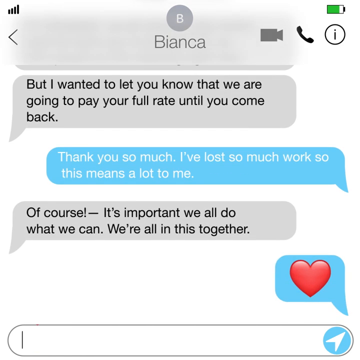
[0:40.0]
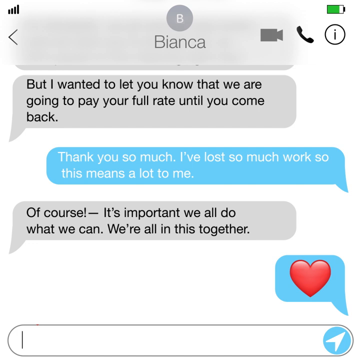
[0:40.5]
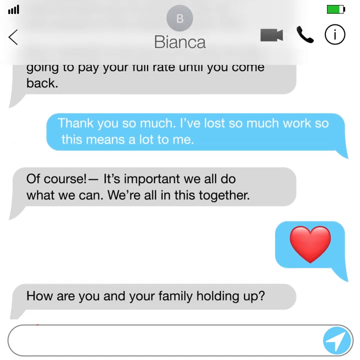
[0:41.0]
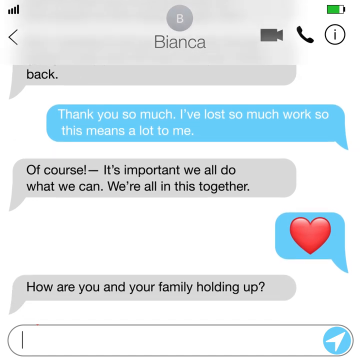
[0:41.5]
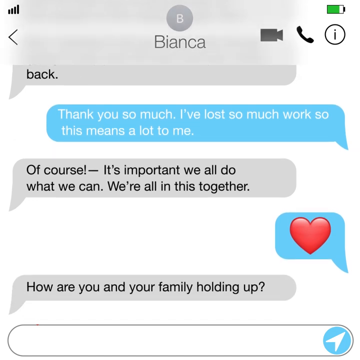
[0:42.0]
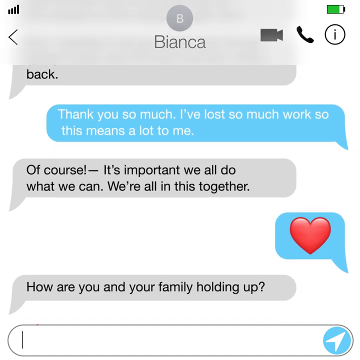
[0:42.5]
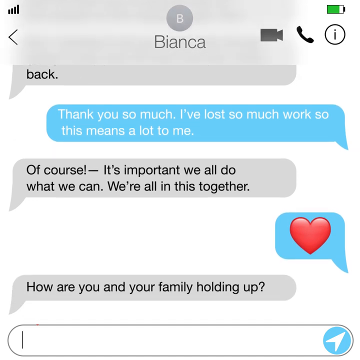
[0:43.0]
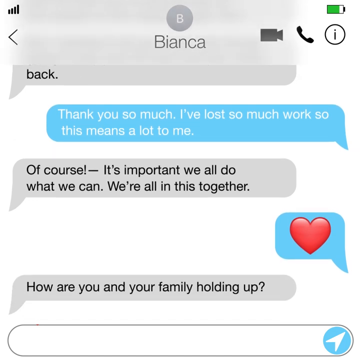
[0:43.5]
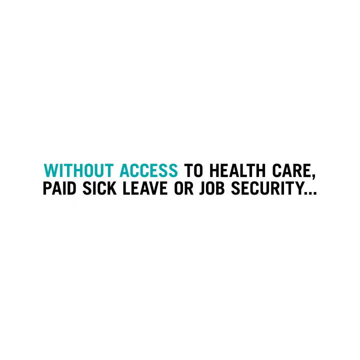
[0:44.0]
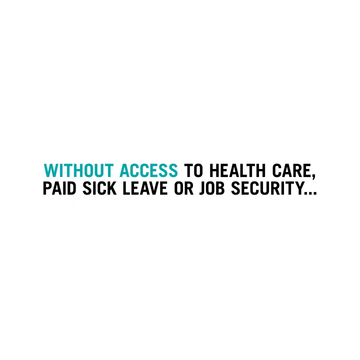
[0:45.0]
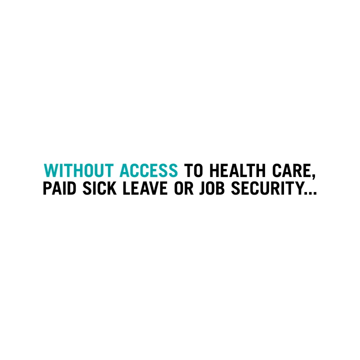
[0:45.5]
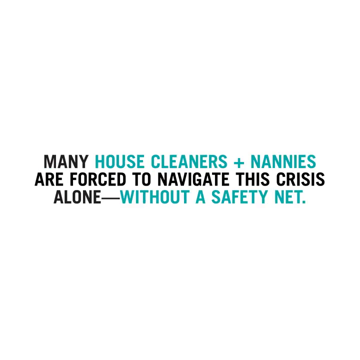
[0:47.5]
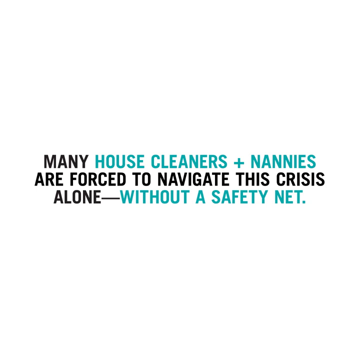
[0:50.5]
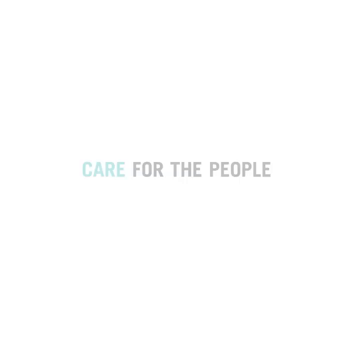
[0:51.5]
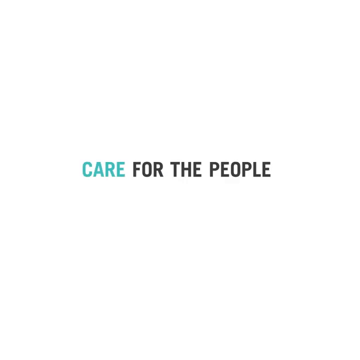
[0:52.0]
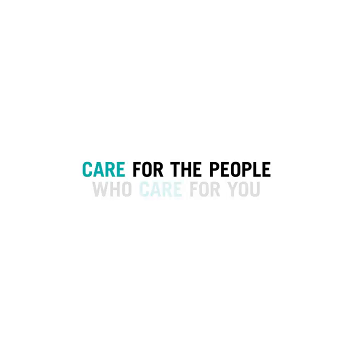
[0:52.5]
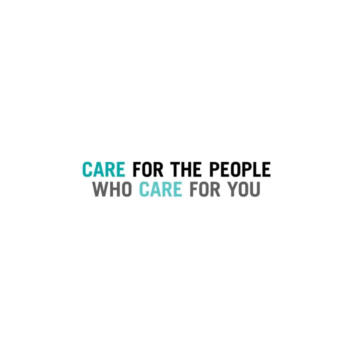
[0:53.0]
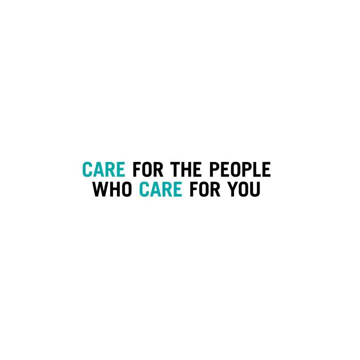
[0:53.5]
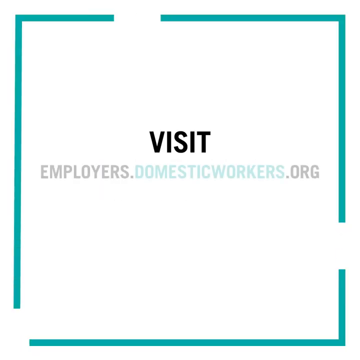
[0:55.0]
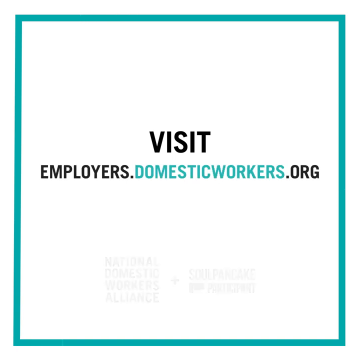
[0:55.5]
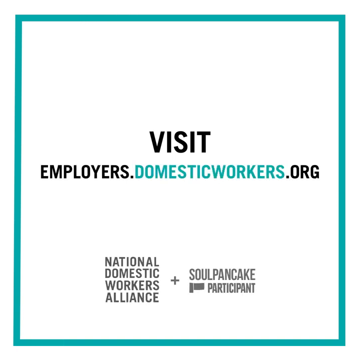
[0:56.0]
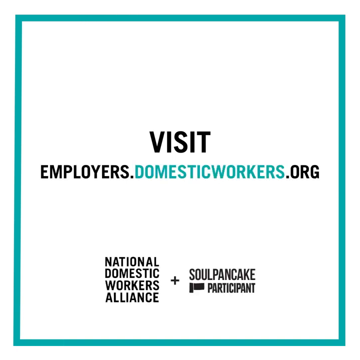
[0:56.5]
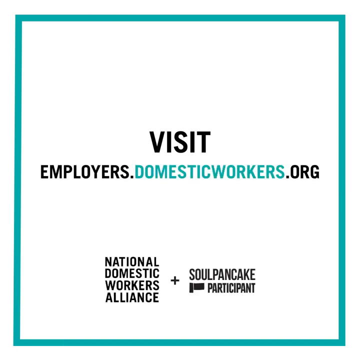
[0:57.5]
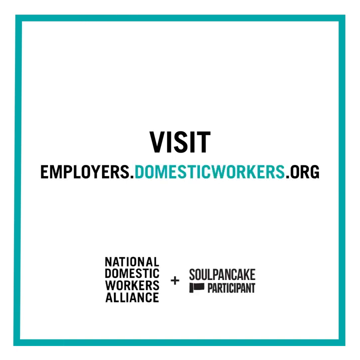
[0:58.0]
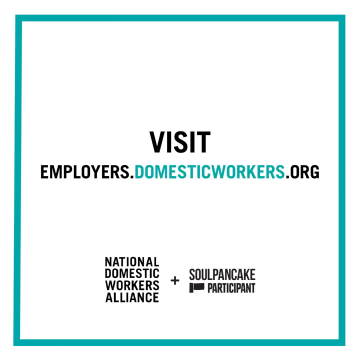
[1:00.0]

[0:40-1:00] More text appears beneath, in white inside a blue bubble: "of course it's important we all do what we can, we're in this together." Beneath that is a new blue bubble with a red heart inside it. Another message forms inside a gray bubble in black text: "how are you and your family holding up?" The video cuts away from the phone chat to a slogan in the middle of a white background reading "without access to health care, paid sick leave or job security". The text transitions to another slogan: "many house cleaners plus nannies are forced to navigate this crisis alone without a safety net." New text then fades in slowly, line by line: "care for the people who care for you." The video ends with "visit employers.domesticworkers.org".